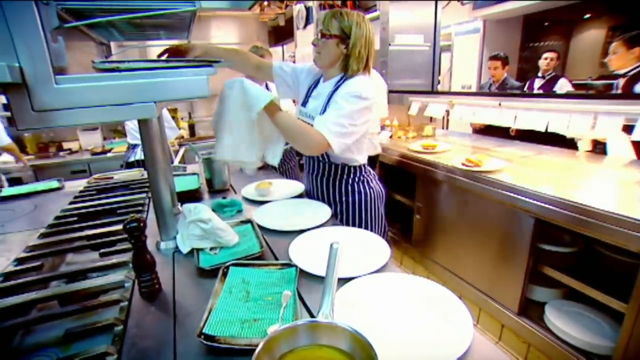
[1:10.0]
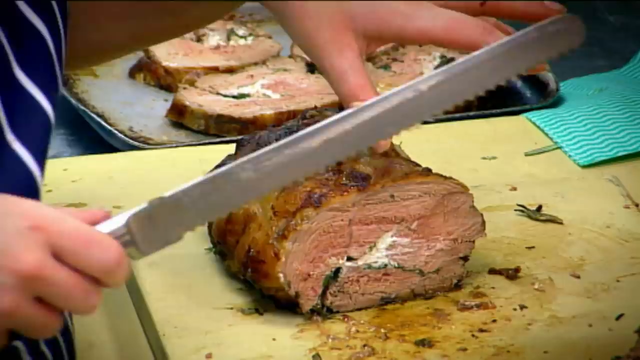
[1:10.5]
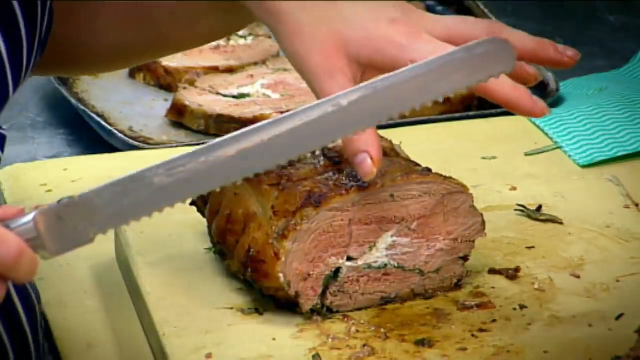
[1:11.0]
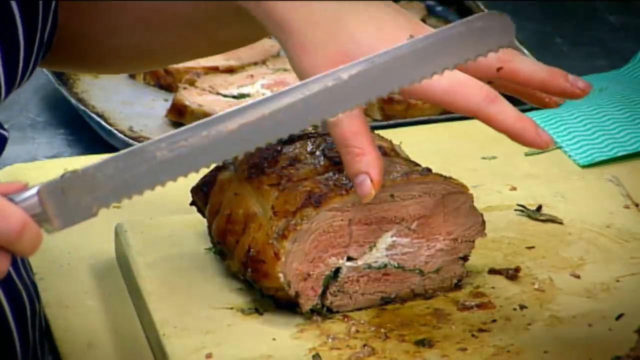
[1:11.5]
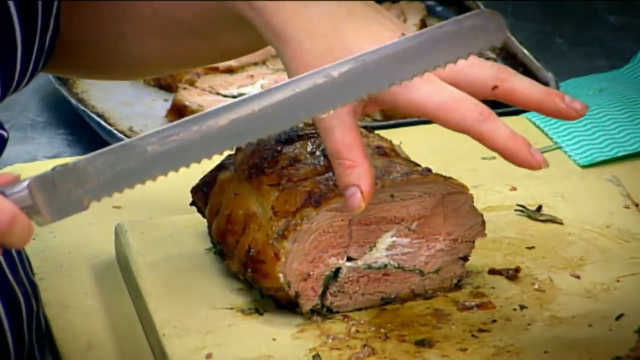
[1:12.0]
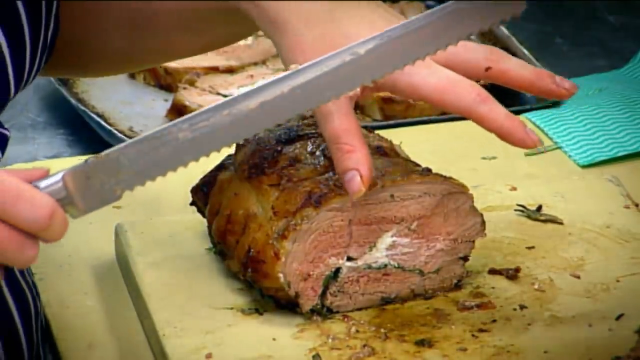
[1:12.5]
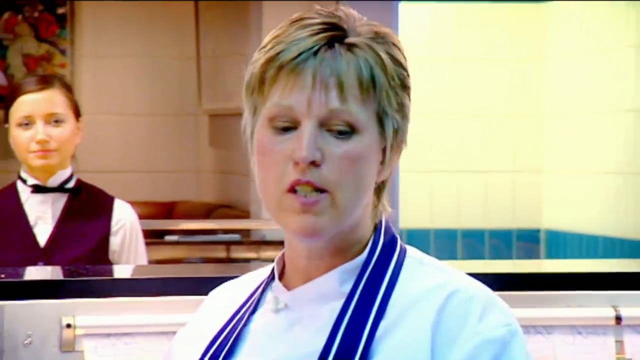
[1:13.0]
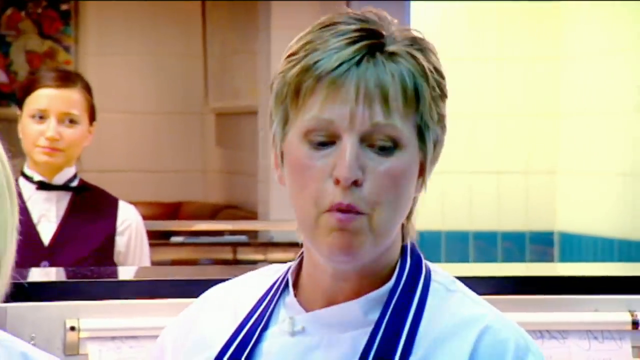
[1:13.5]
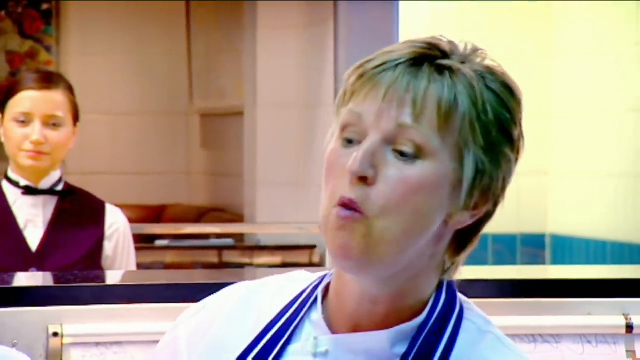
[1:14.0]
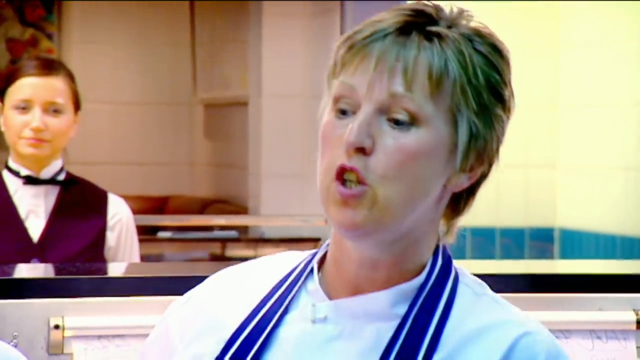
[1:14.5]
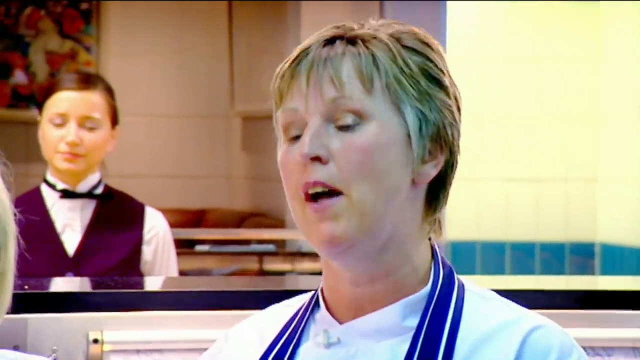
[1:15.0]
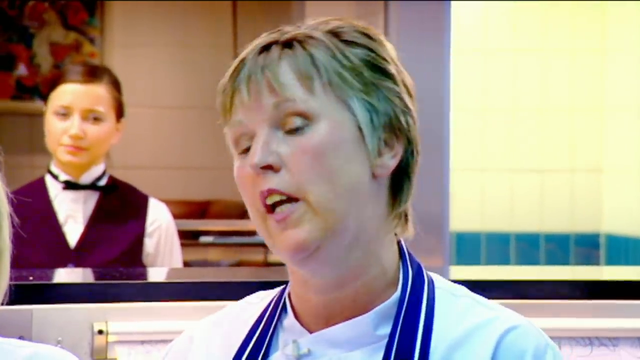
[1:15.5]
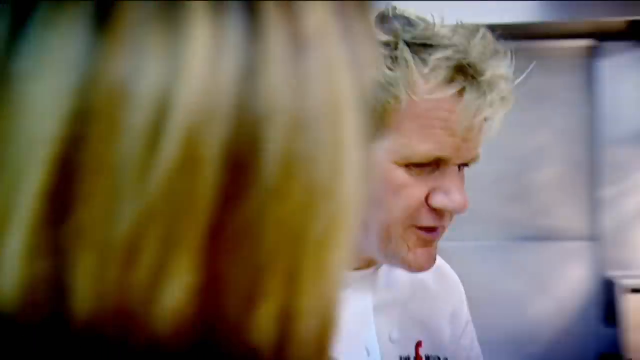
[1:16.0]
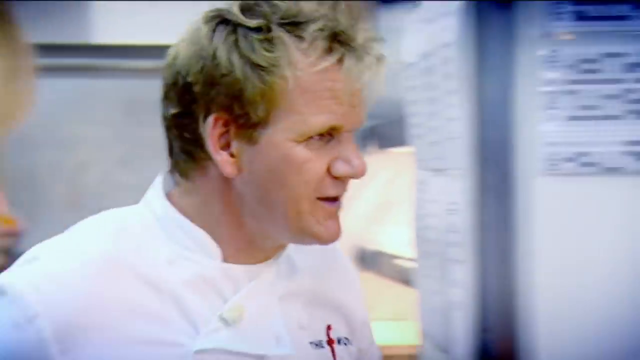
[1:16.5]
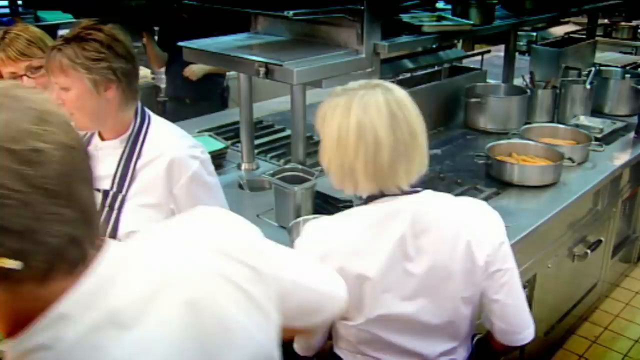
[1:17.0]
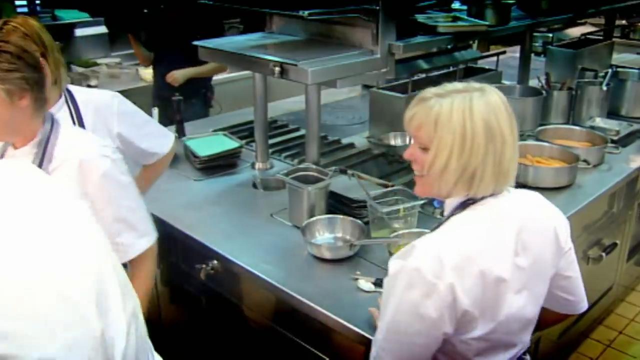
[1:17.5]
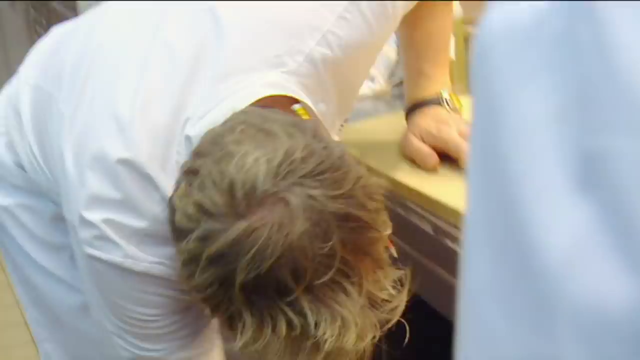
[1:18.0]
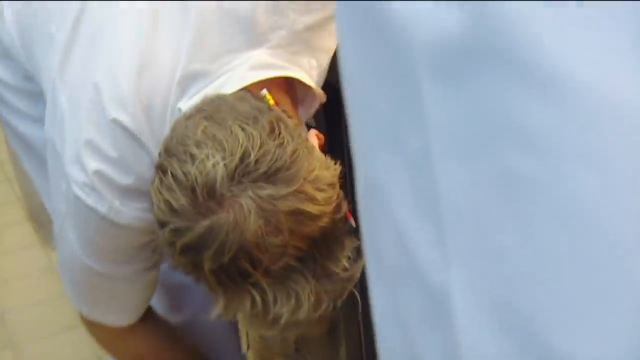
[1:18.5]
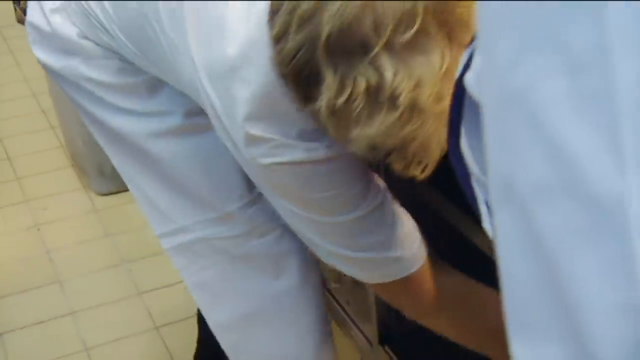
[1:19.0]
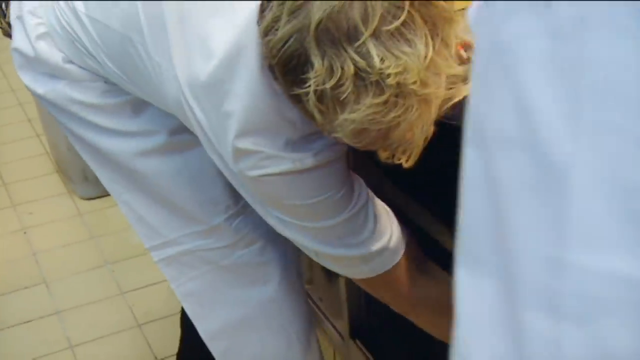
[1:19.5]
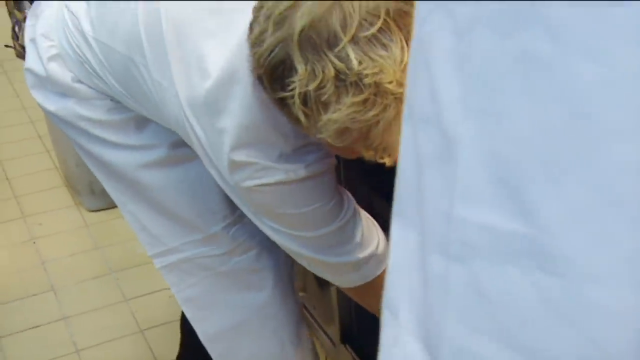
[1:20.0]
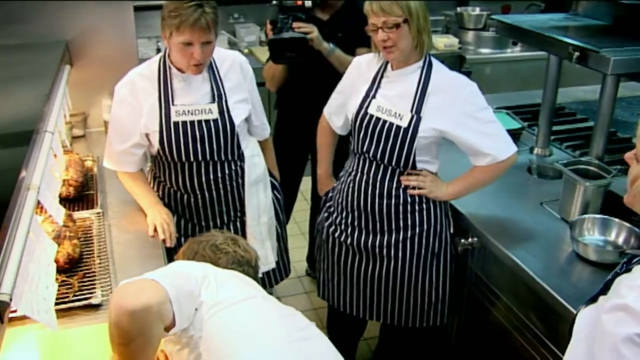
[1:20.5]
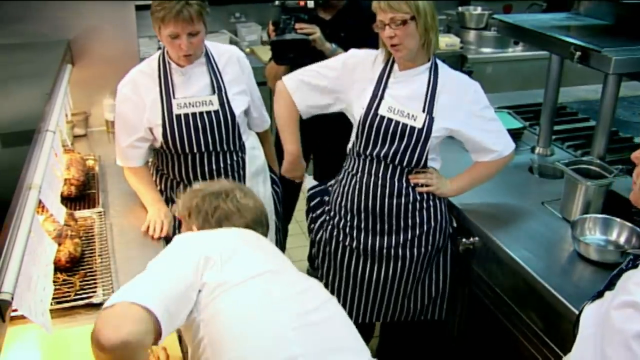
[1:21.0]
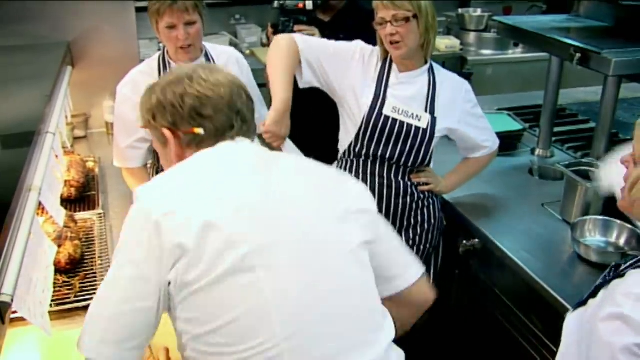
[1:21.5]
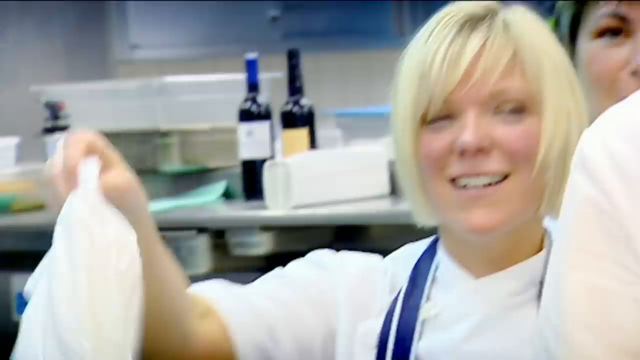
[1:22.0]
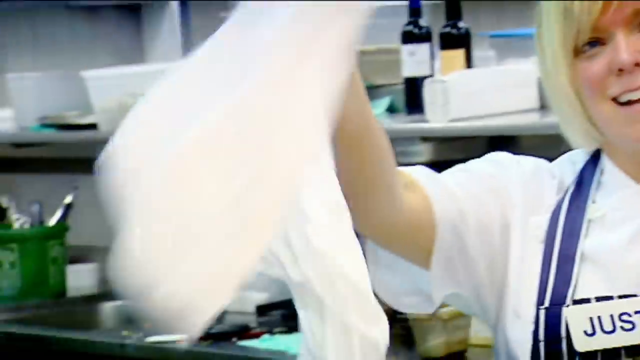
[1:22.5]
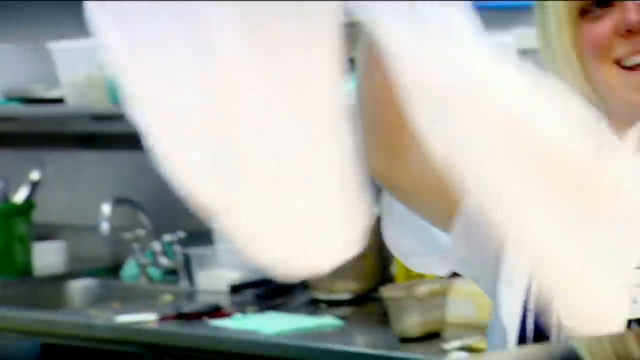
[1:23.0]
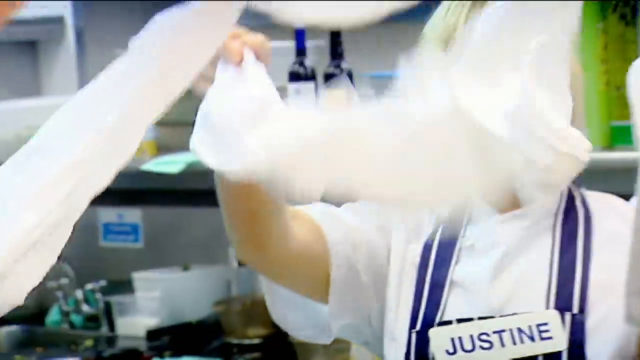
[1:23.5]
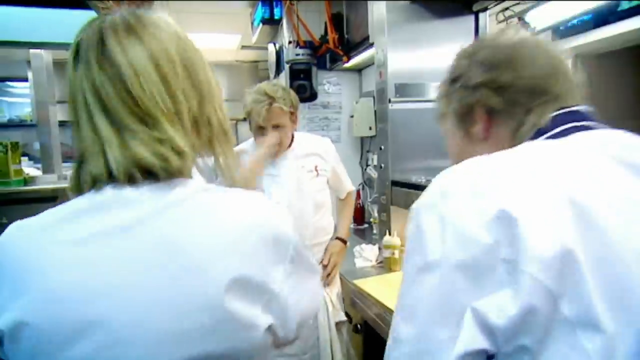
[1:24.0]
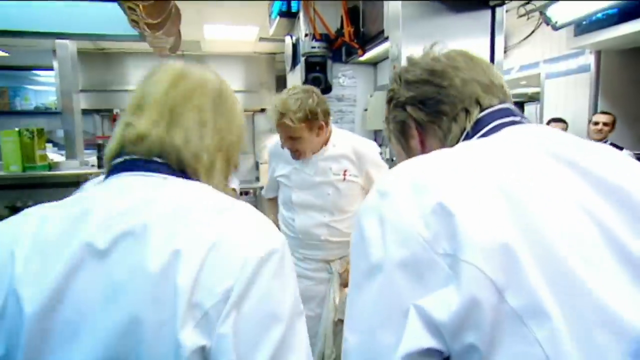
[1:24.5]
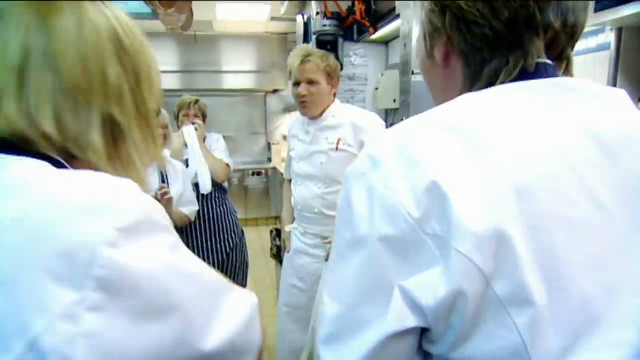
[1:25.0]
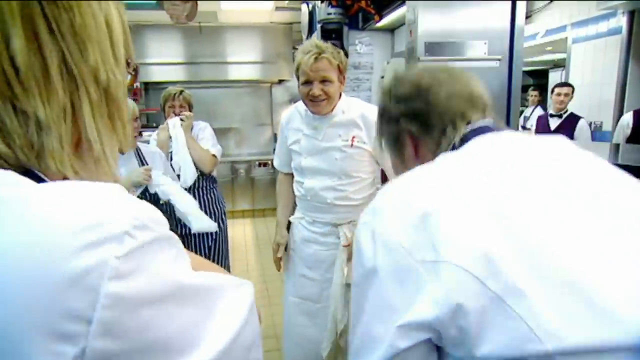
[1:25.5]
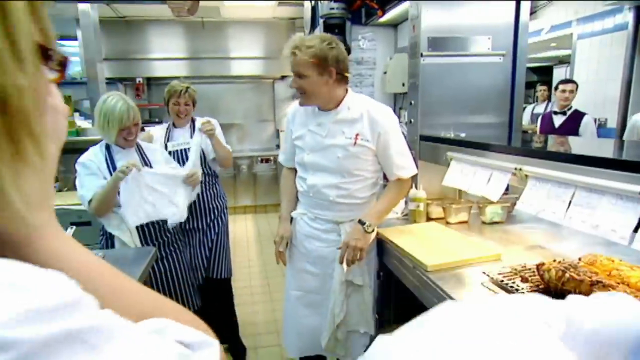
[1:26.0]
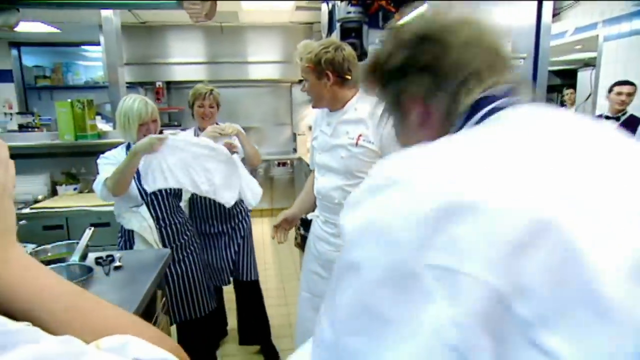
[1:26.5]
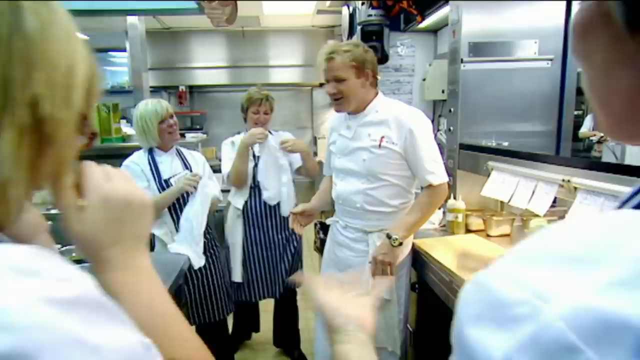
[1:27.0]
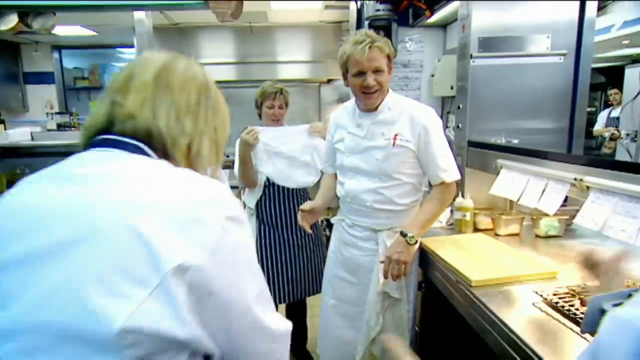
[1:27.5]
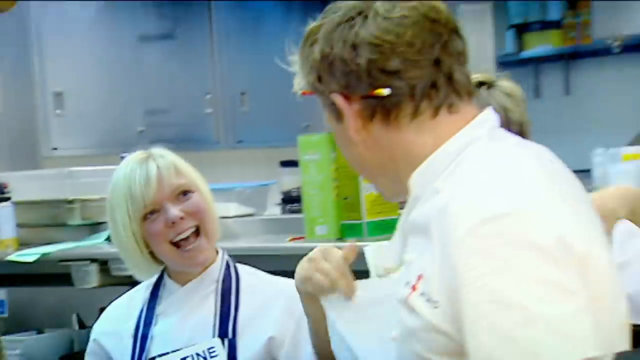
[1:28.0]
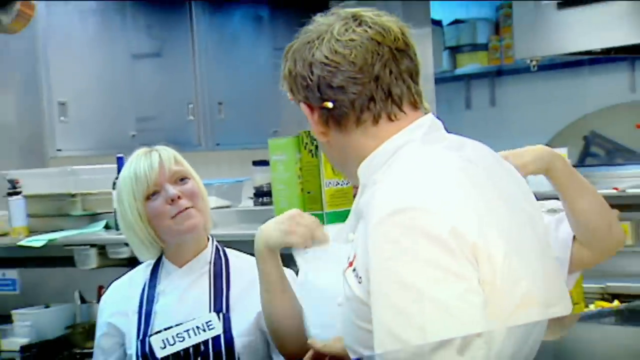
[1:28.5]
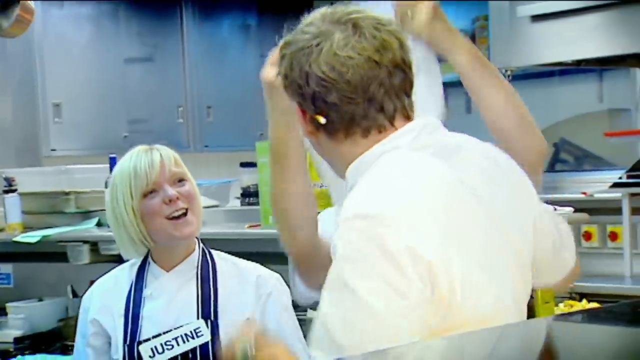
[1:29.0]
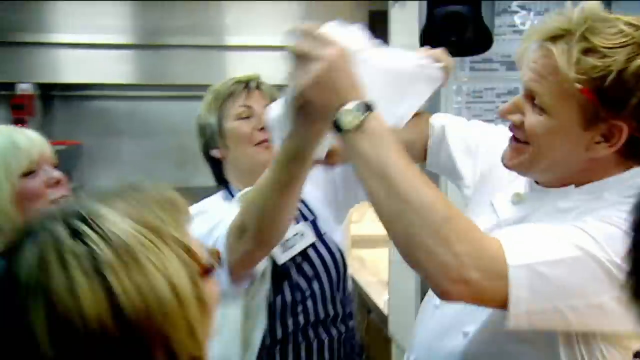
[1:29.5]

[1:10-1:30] Waitresses are in the kitchen, busy serving food, cutting it into pieces and talking as they work. They walk in different directions, showing how busy they are. They show off their napkins and play around in the kitchen with the head chef. Behind them, waiters and waitresses wait to take the food out to the restaurant. The chefs have lined up plates on the counter and put food onto them, cutting the meat and placing it on the plates, then hand the plates to the waiters and waitresses waiting behind to serve the people in the restaurant.